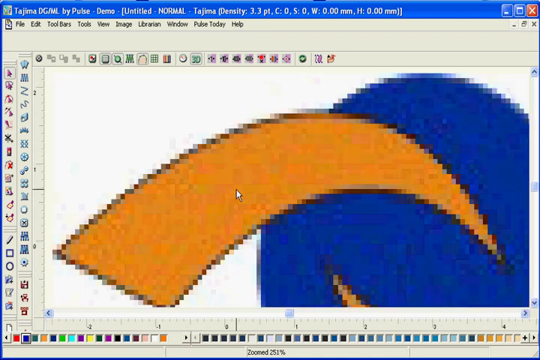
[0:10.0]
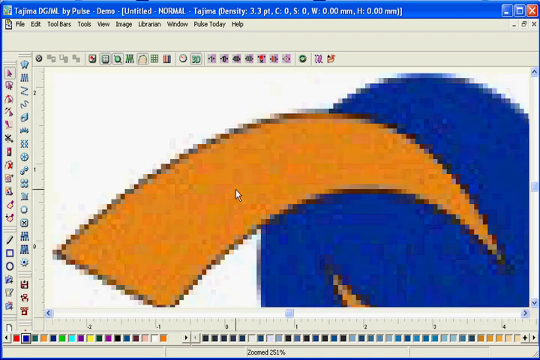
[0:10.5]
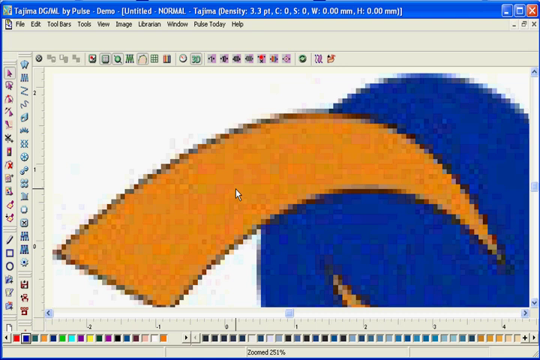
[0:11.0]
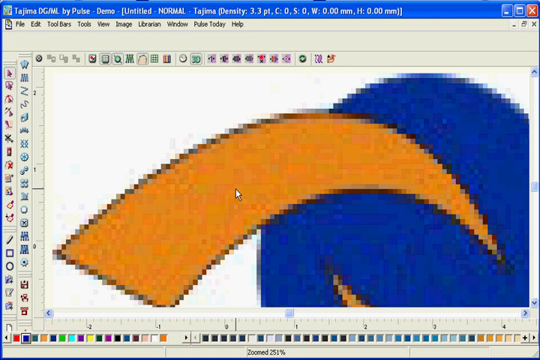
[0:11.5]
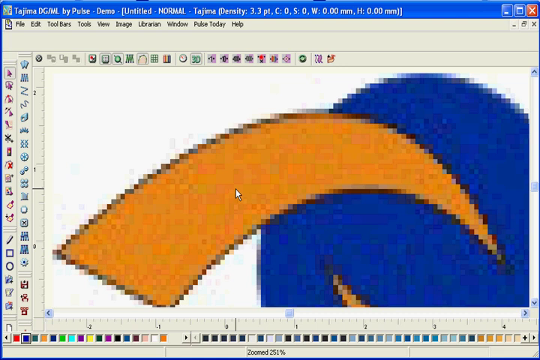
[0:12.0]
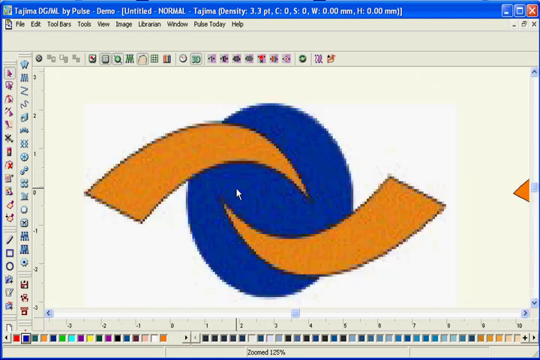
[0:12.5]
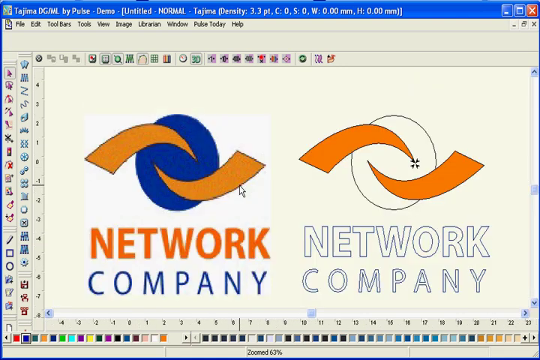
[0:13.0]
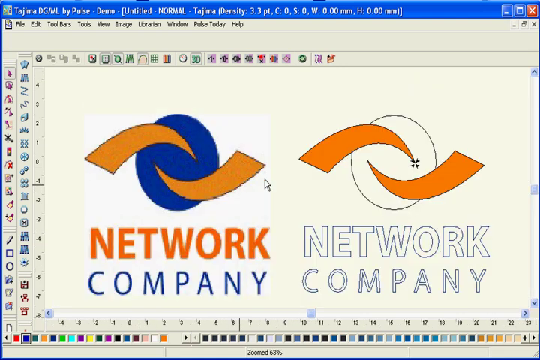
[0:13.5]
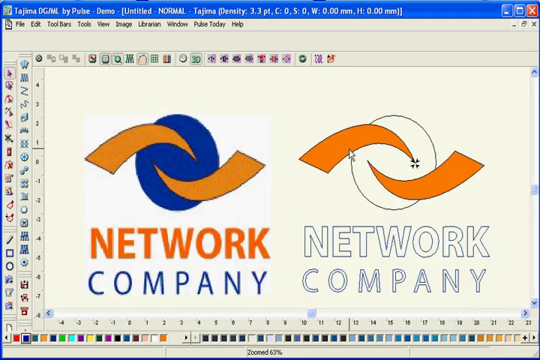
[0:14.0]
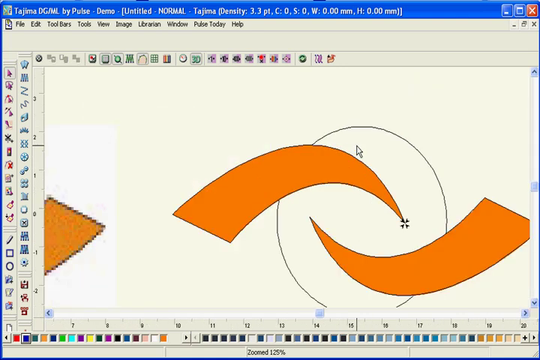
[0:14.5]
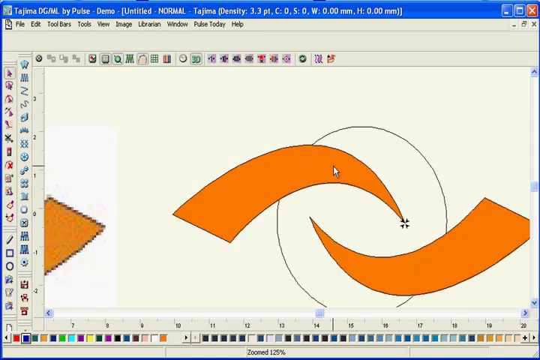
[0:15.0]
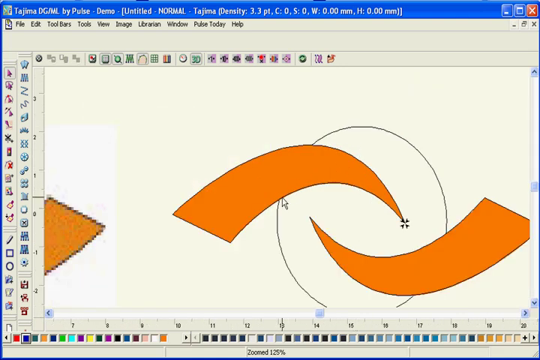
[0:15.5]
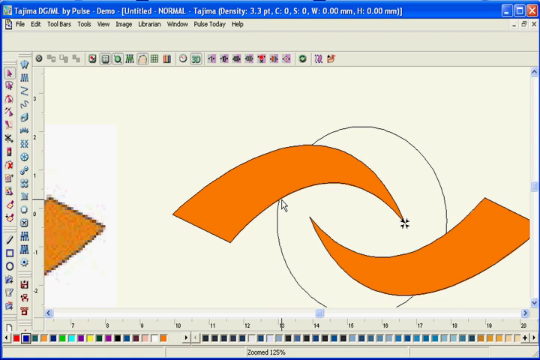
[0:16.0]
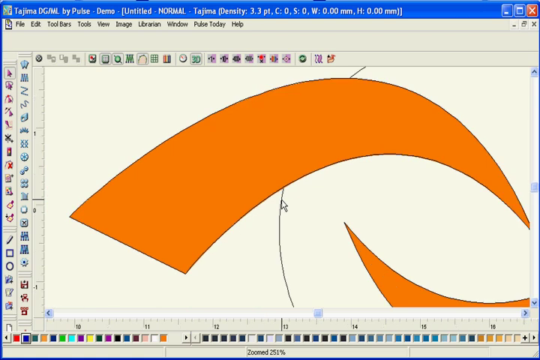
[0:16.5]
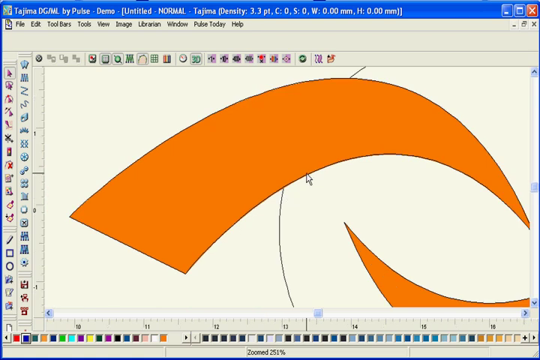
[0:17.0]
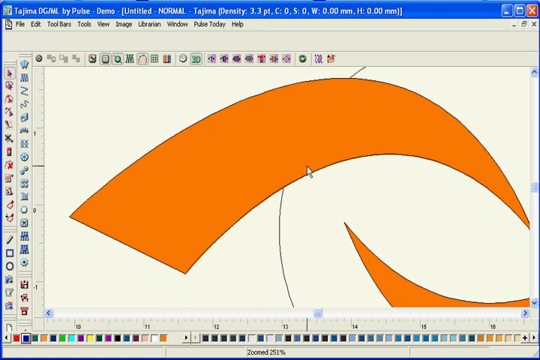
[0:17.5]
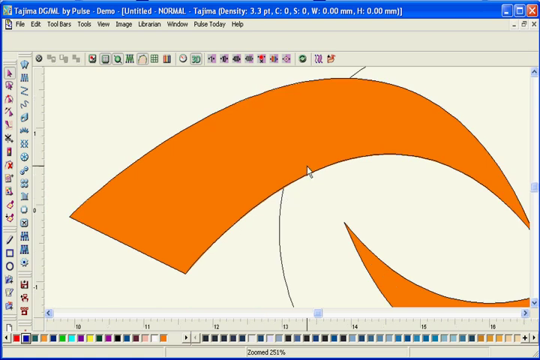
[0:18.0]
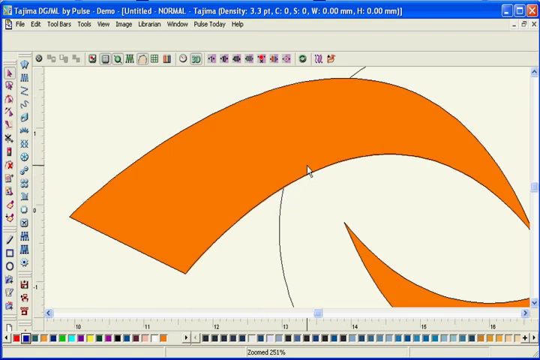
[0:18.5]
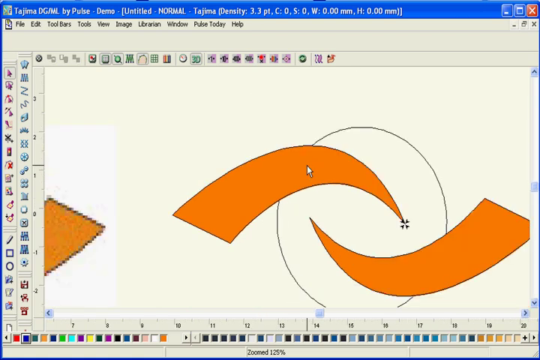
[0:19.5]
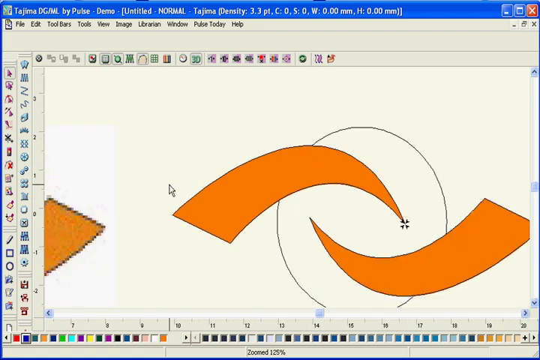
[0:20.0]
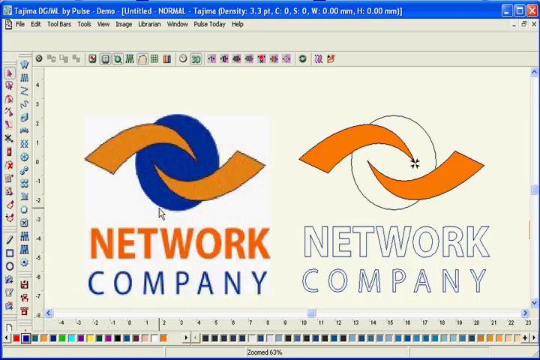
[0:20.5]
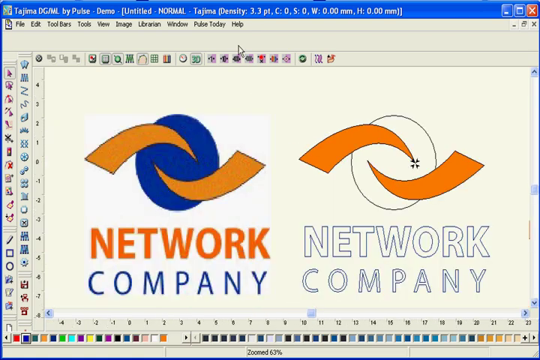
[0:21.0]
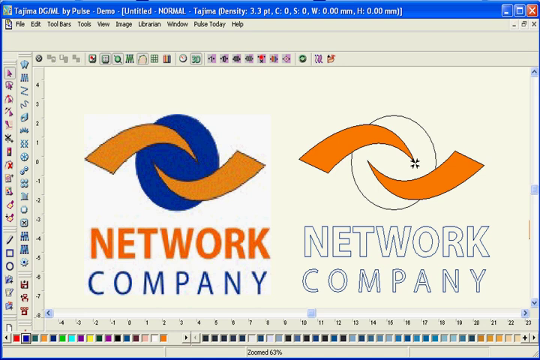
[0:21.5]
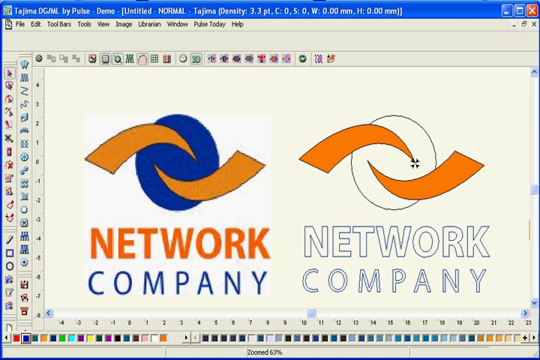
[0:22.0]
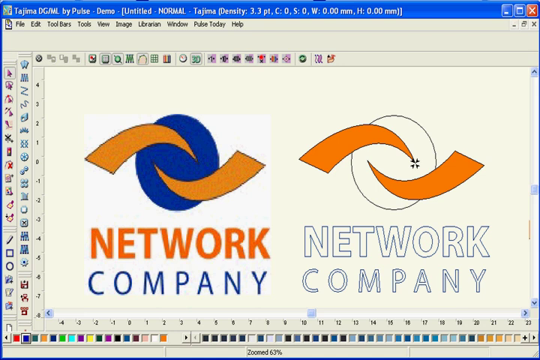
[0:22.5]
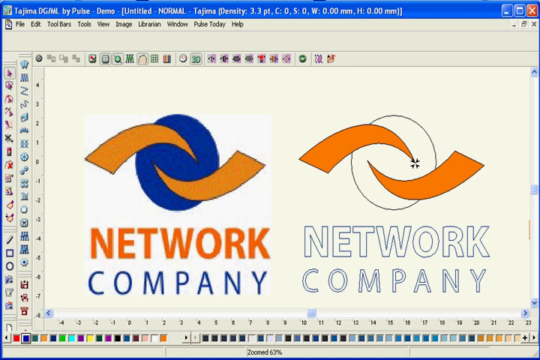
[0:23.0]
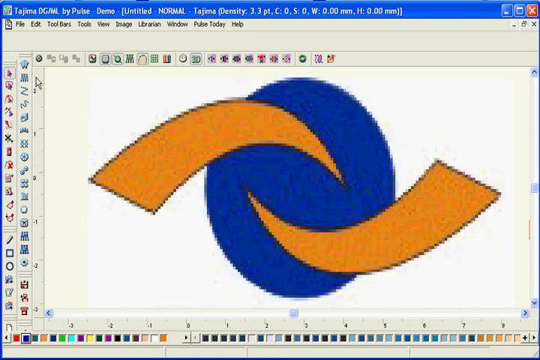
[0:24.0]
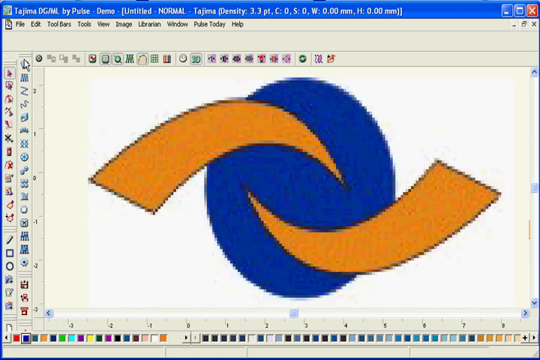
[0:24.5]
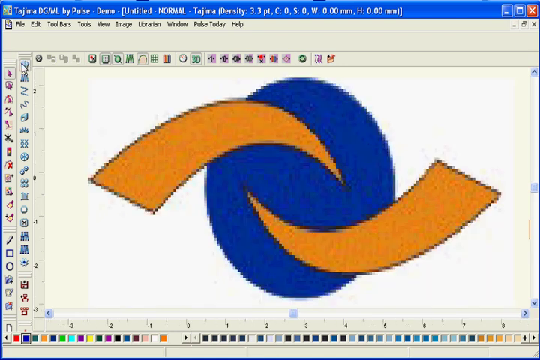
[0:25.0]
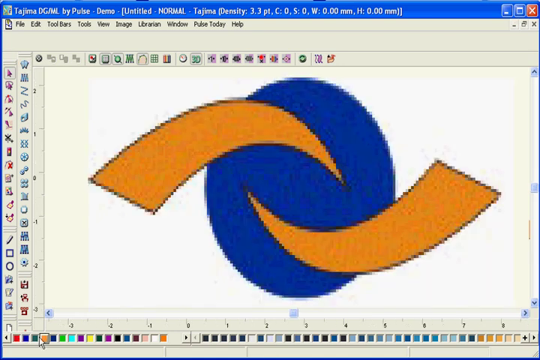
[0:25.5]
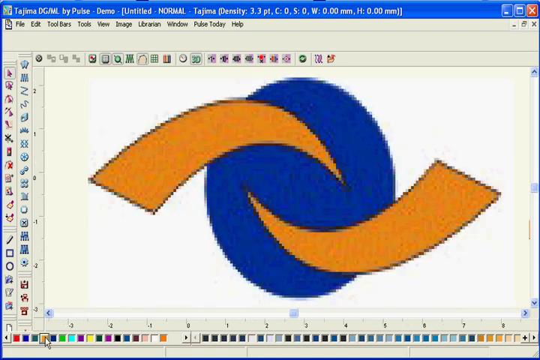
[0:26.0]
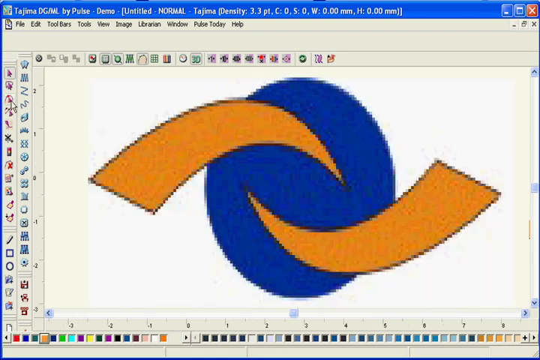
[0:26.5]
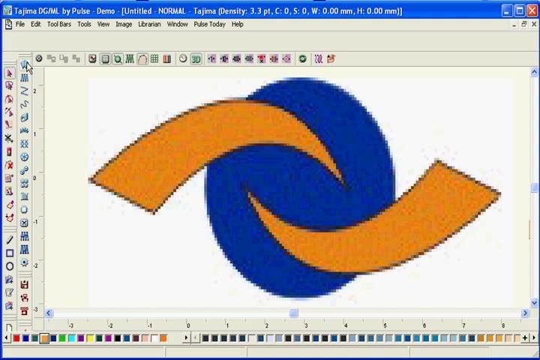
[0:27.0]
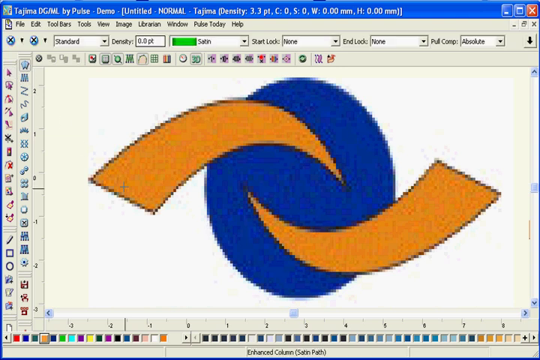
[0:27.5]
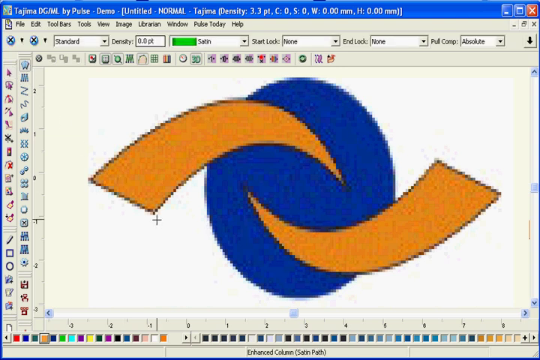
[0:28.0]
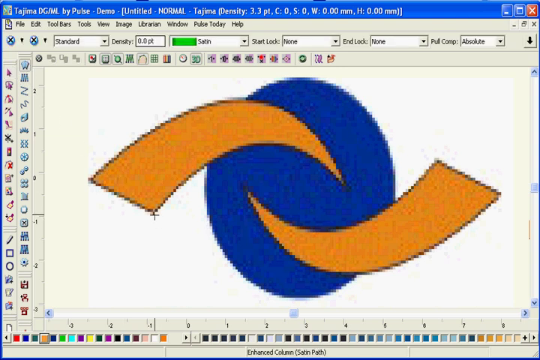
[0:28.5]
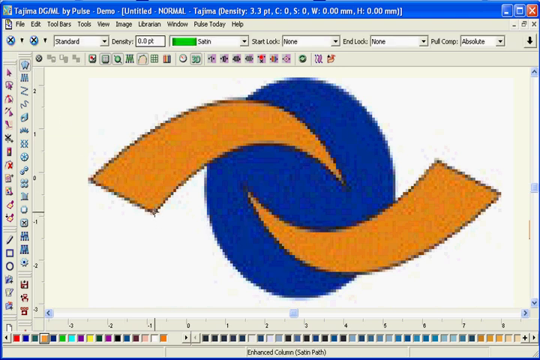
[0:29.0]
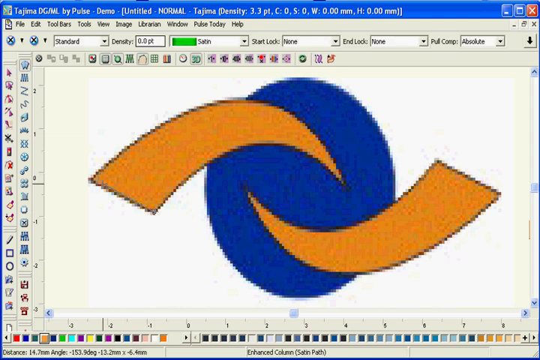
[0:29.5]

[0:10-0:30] Someone's computer screen is shown. At the top it reads "TAJIMA", then "DGML" and "by Pulse", and it is a demo. The screen has two primary colors. On the right side, taking up most of the screen, is a blue-shaped object that is round at the top. A large orange shape goes into the blue, getting smaller from left to right; it looks like a bridge or a type of rainbow going into the blue. After that, "Network Company" appears, with "Network" in orange and "Company" in blue. Above it is a blue sphere with orange going into the circle, large on the outside and getting smaller towards a point as it goes in.